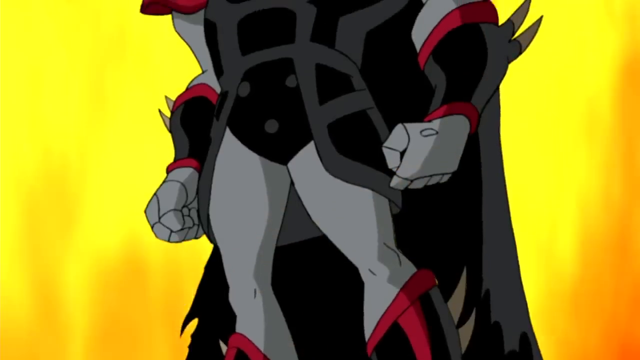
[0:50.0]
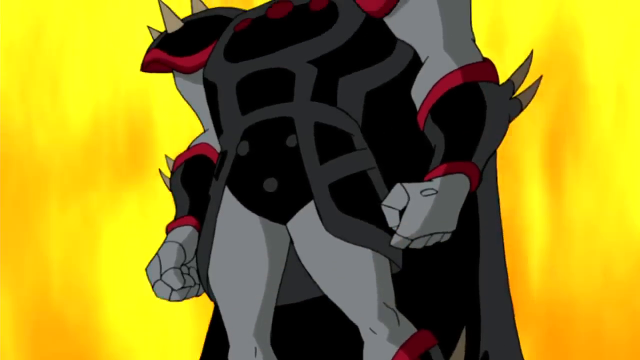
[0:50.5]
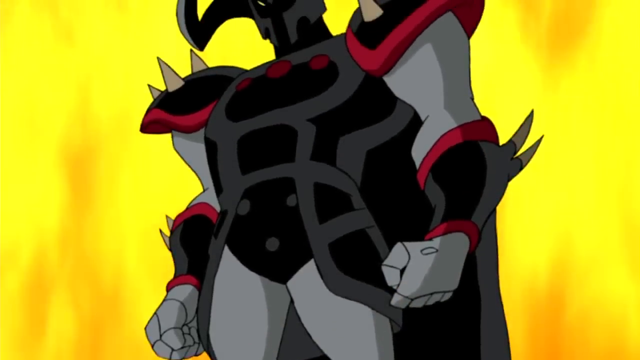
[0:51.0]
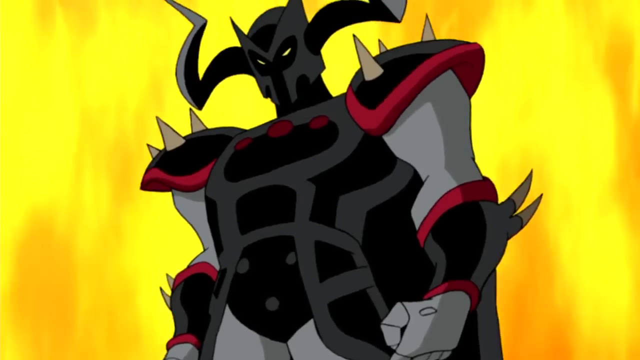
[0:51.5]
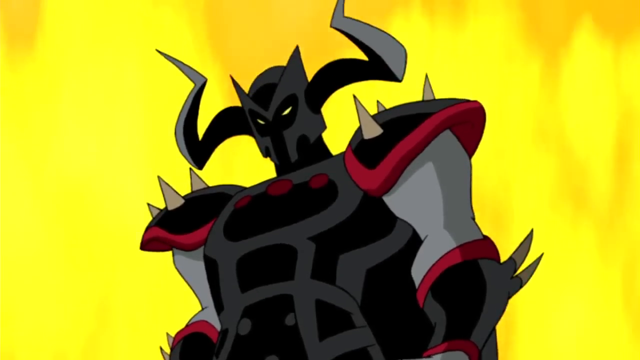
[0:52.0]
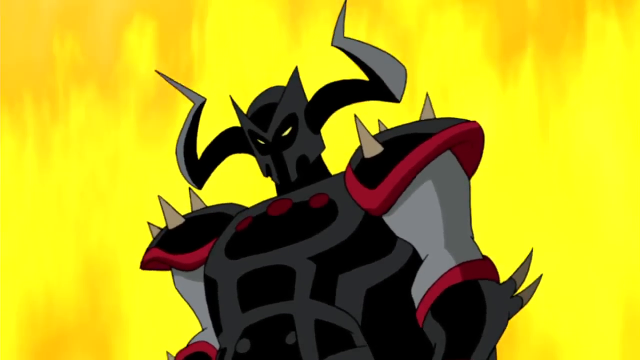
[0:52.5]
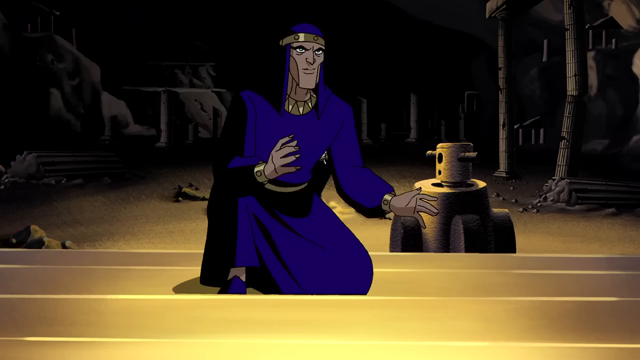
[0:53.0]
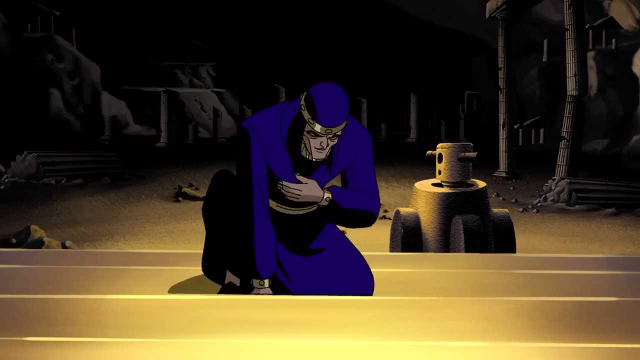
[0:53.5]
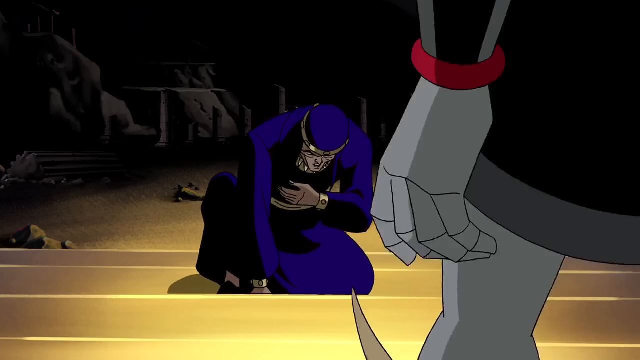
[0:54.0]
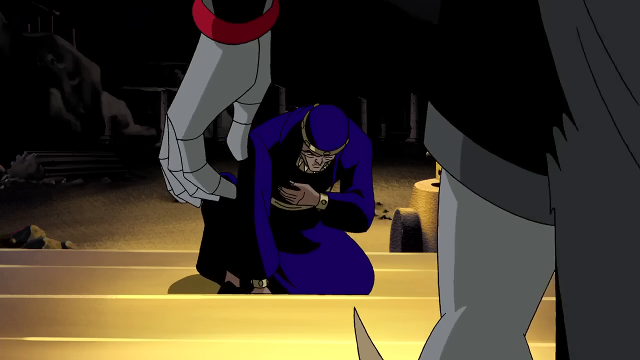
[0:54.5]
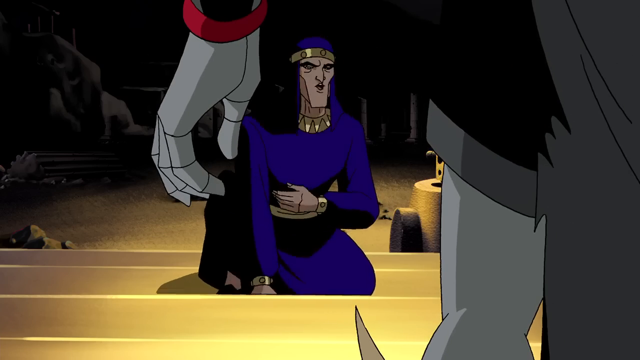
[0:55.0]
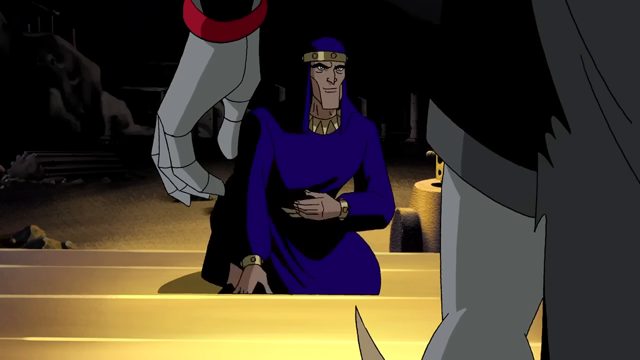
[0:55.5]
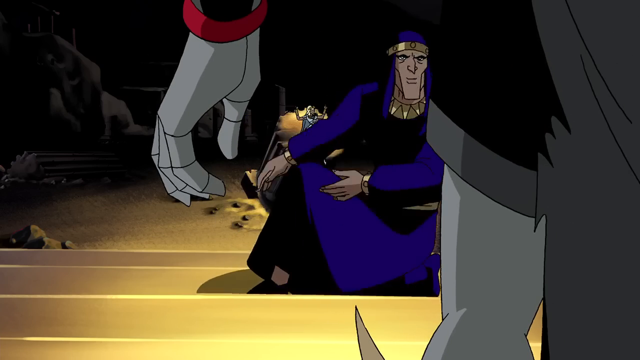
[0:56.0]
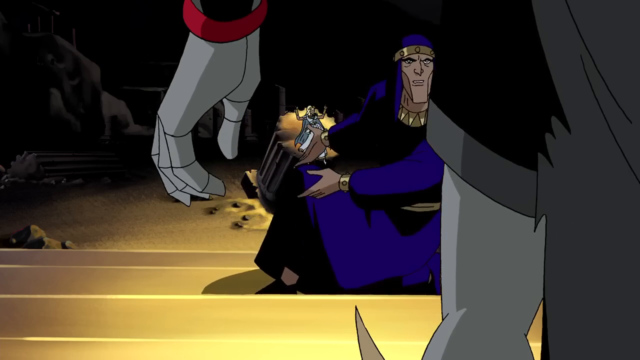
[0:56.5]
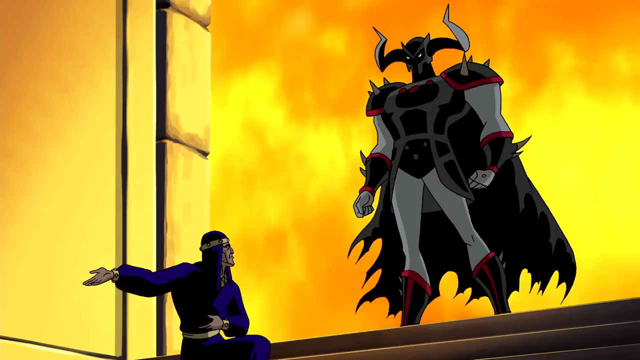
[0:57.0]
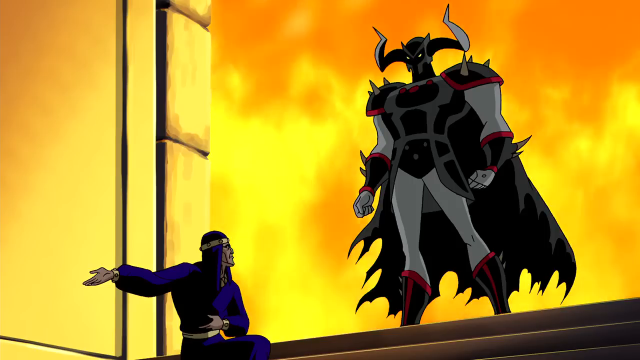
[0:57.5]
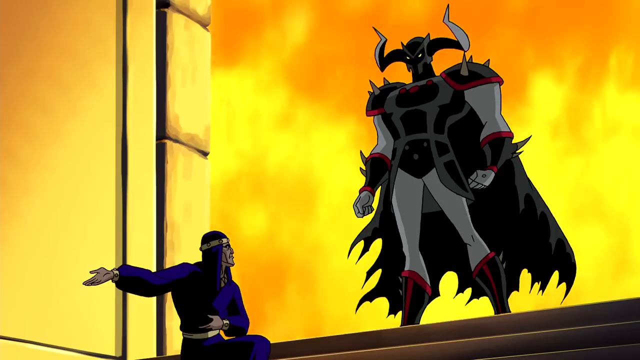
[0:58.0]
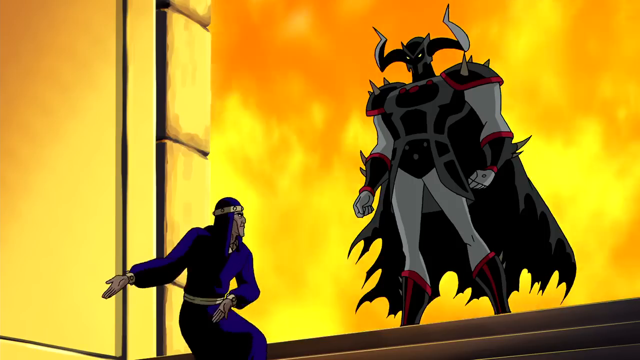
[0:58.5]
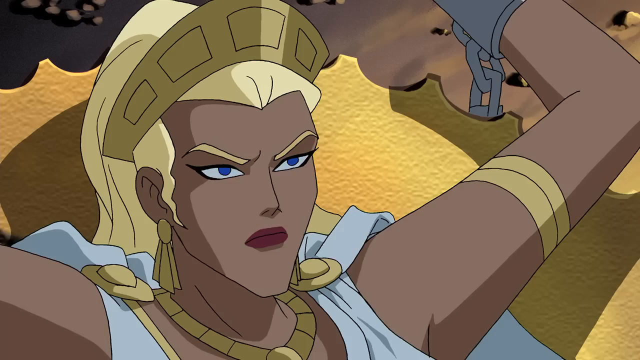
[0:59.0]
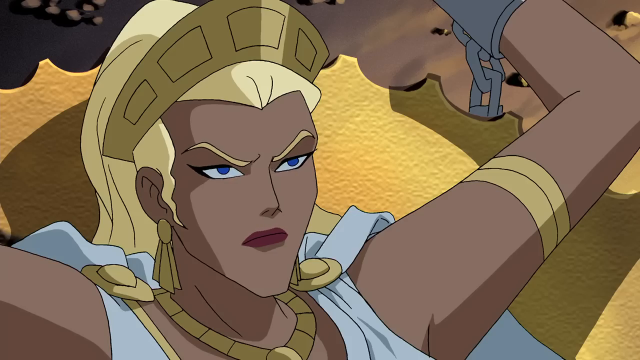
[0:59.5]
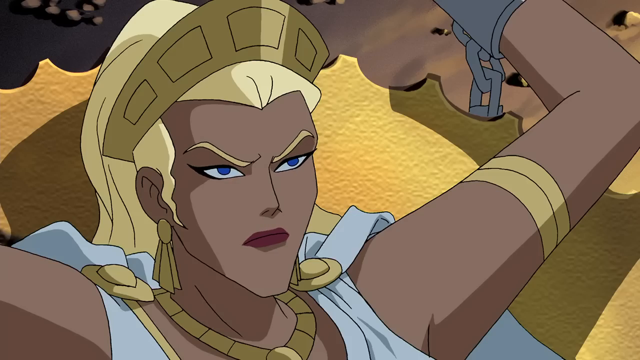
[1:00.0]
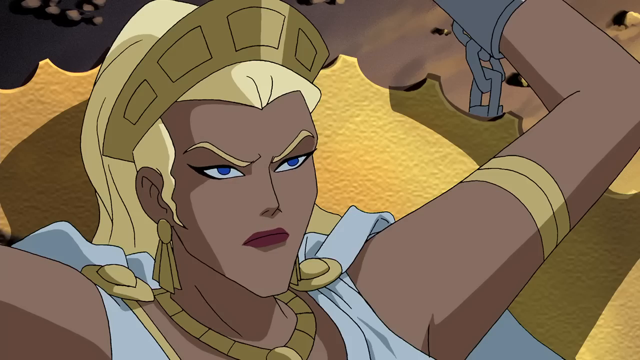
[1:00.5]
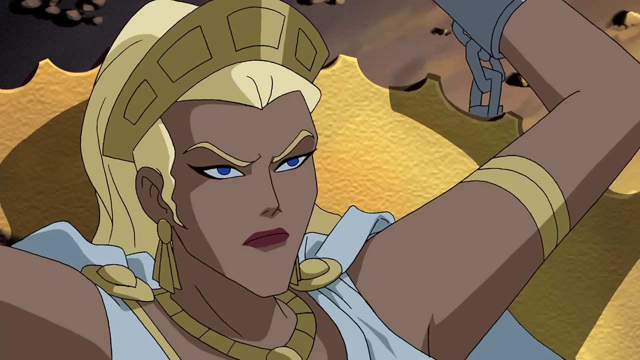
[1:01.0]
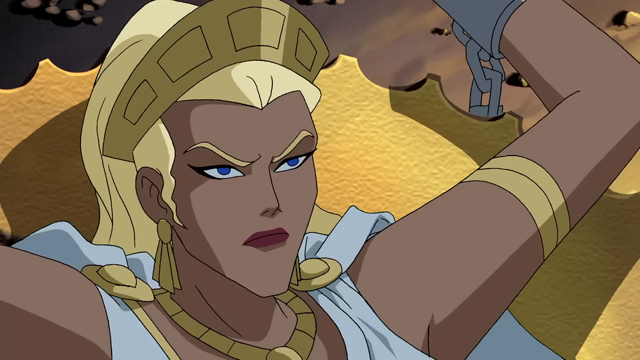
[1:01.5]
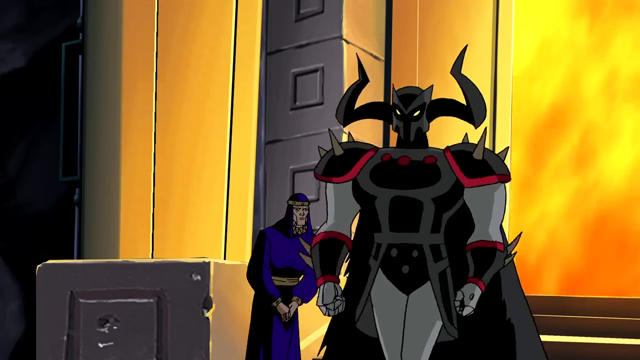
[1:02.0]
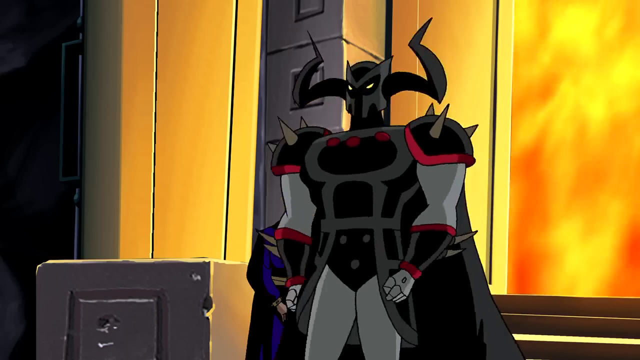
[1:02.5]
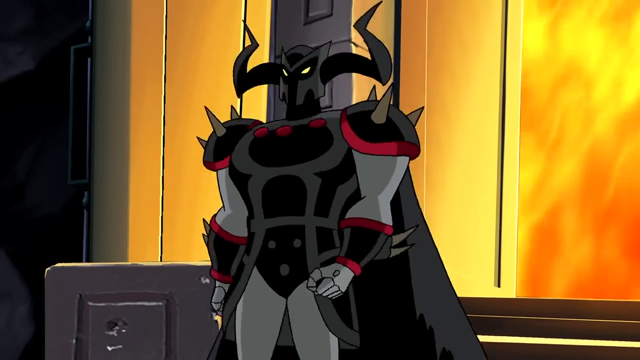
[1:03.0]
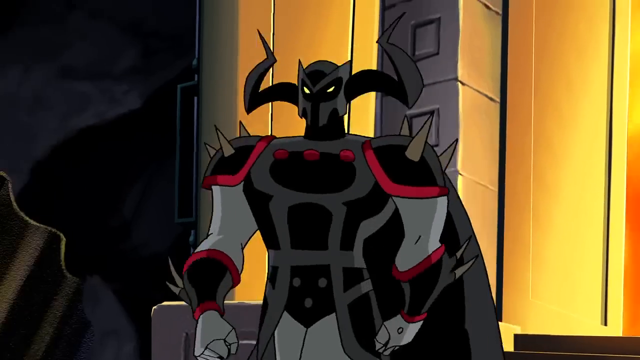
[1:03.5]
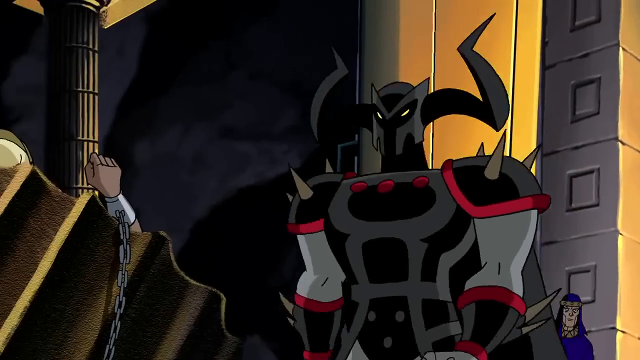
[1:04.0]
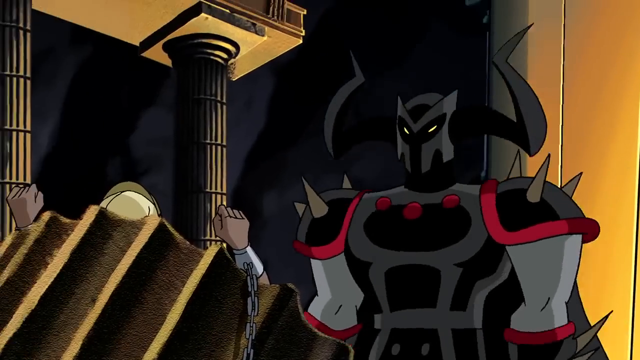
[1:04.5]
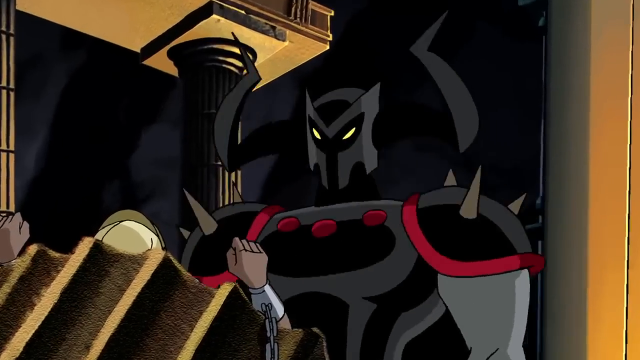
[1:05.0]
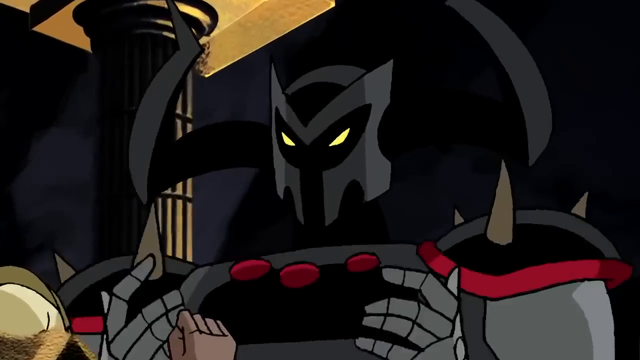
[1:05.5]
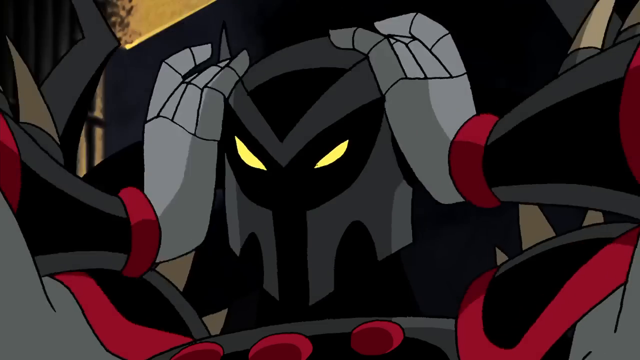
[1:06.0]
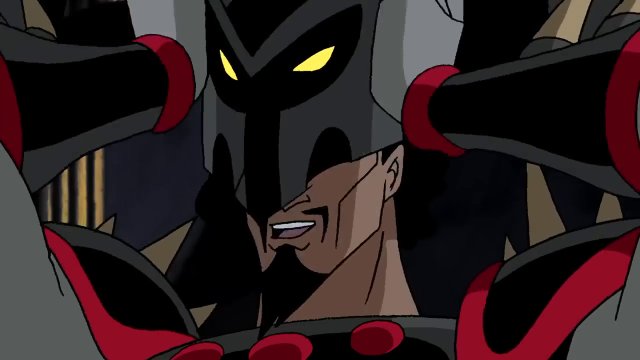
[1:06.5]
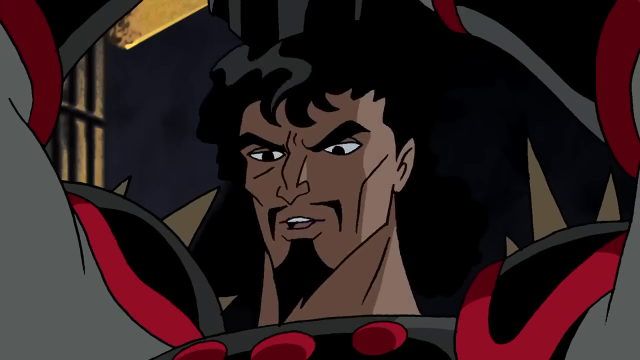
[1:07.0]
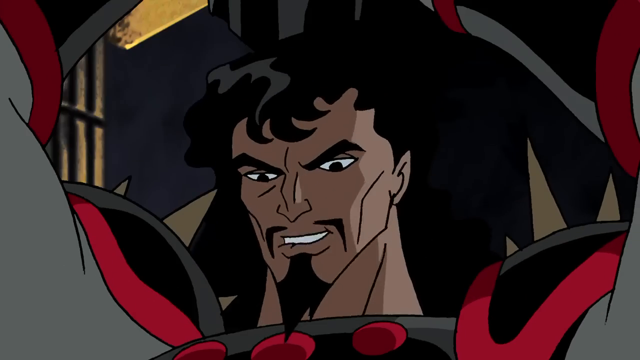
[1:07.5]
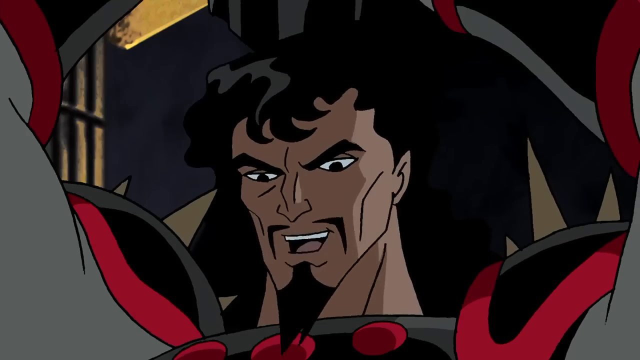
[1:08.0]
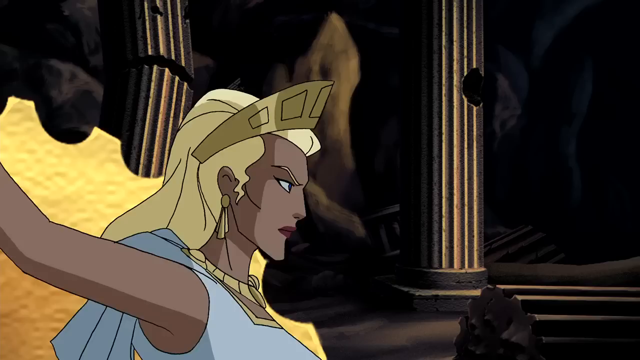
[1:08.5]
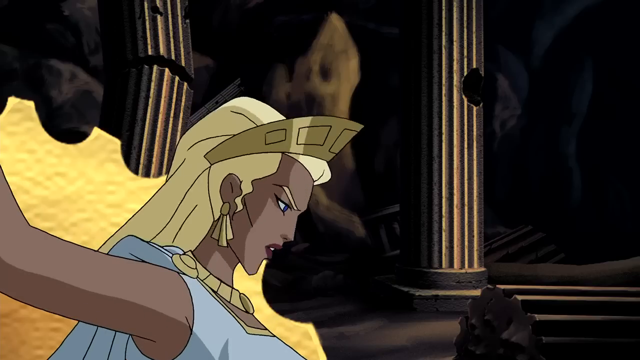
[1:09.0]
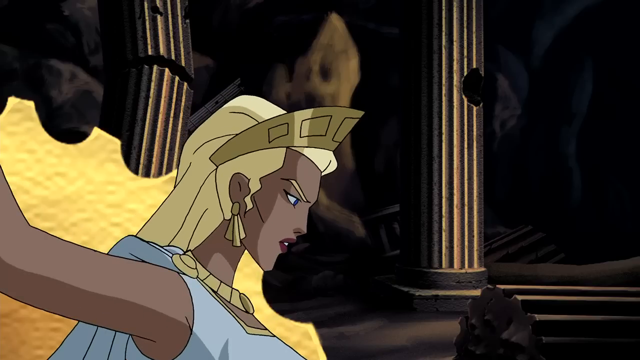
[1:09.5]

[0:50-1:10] The superhero has landed and stands in the foreground, in the middle of the screen, against a bright golden yellow background. He wears a black, gray and red outfit, with his arms down at his sides and his hands balled into fists near his mid-thigh. He has black, red and gray knee-high boots, and what look like spears attached to black, gray and red wristbands on each wrist that come up a bit on his forearms. He wears a cape that is gray with a black underside. The yellow background looks like it has turned into fire. He walks up to a character kneeling in front of him wearing the blue and black robe, then approaches the woman handcuffed by her wrists and feet to the top of the column, with an angry look on his face; she looks like she is fighting to free herself from the handcuffs.